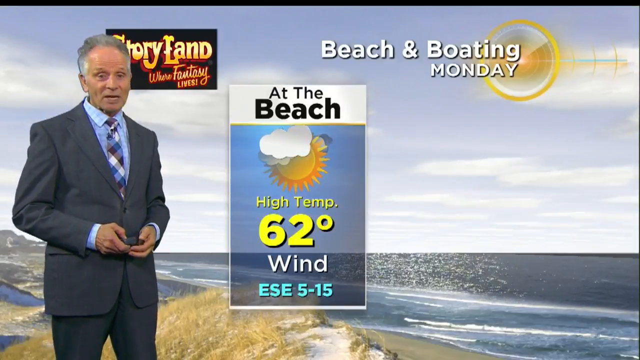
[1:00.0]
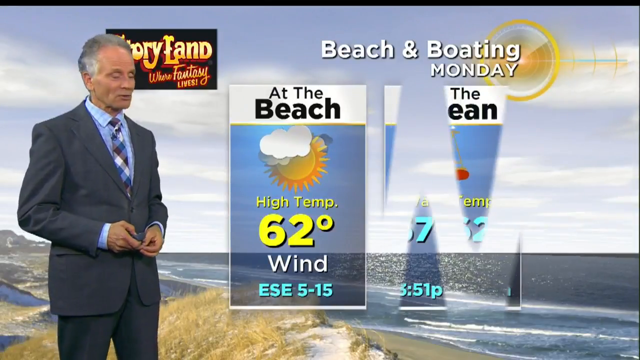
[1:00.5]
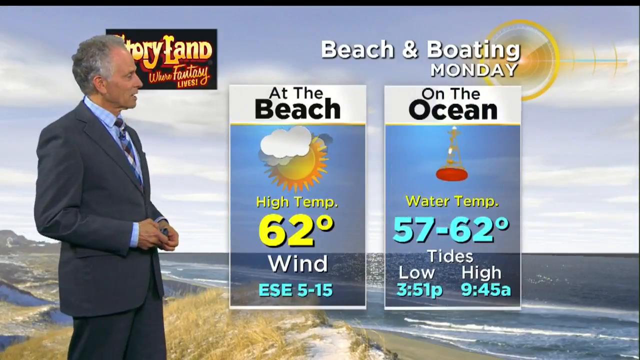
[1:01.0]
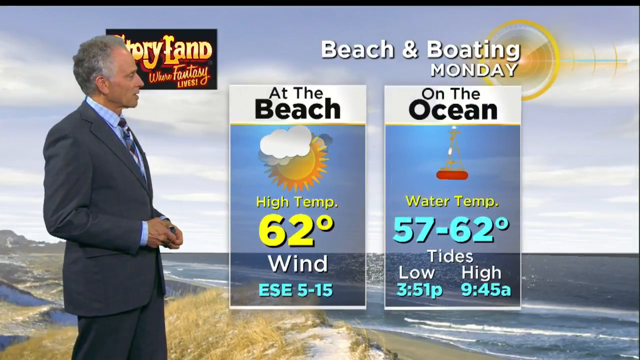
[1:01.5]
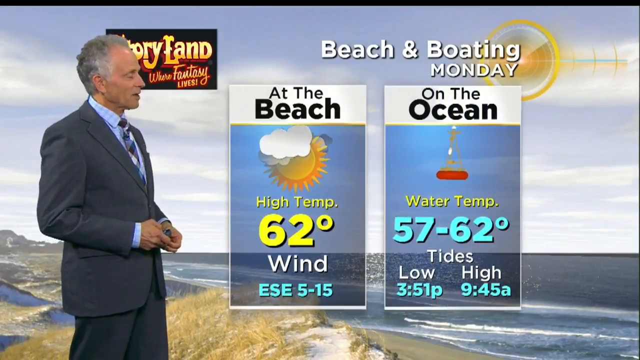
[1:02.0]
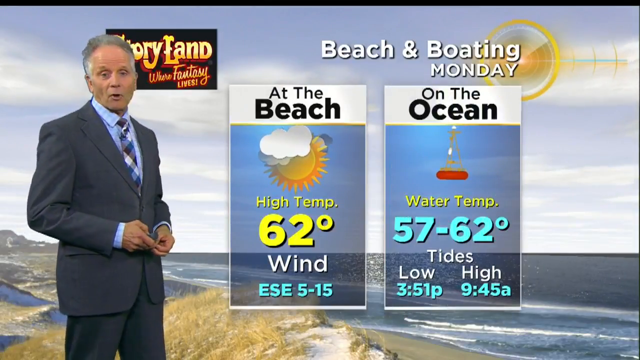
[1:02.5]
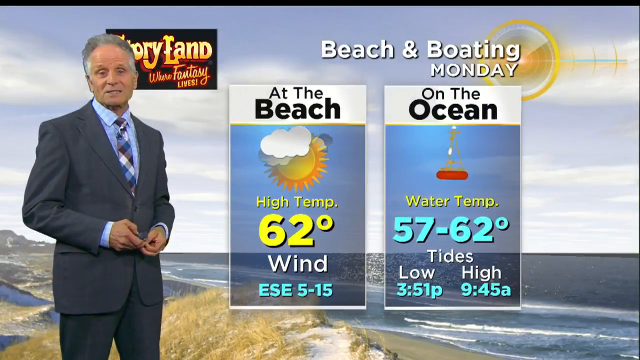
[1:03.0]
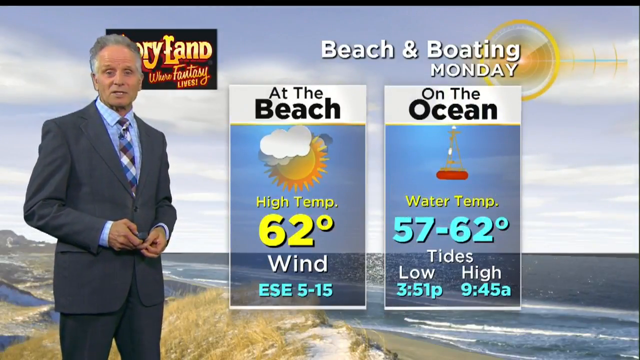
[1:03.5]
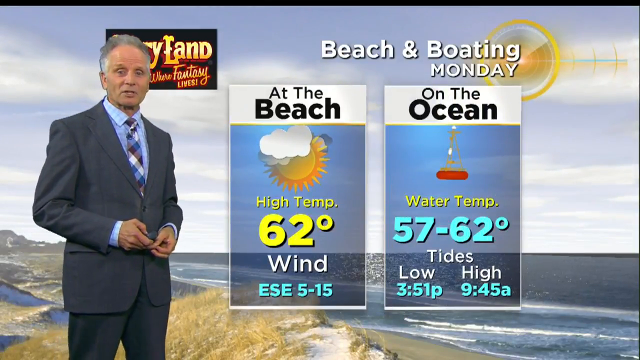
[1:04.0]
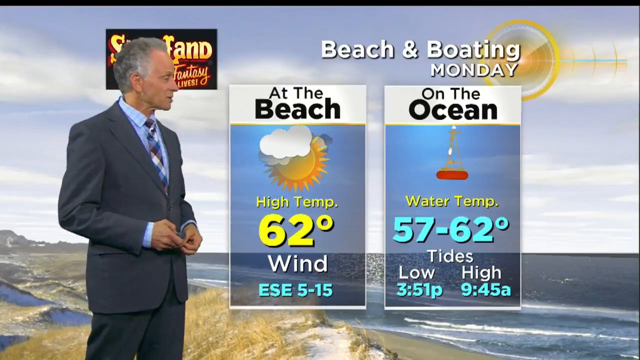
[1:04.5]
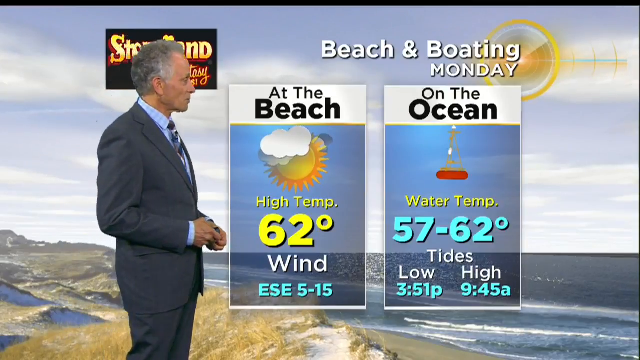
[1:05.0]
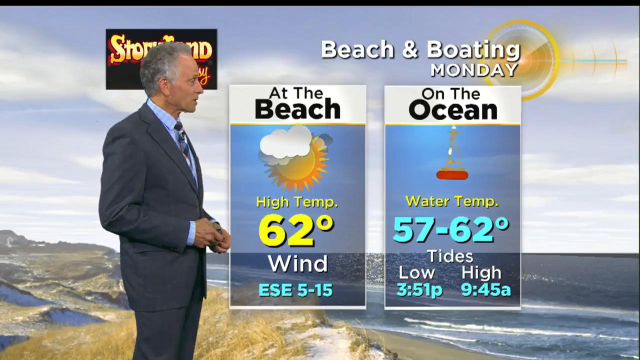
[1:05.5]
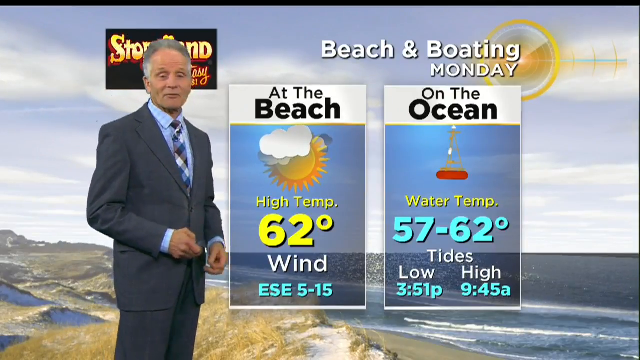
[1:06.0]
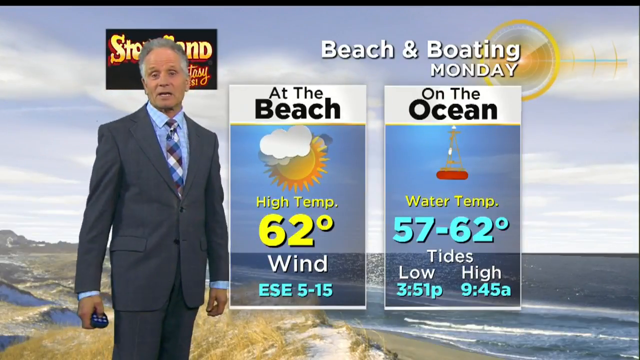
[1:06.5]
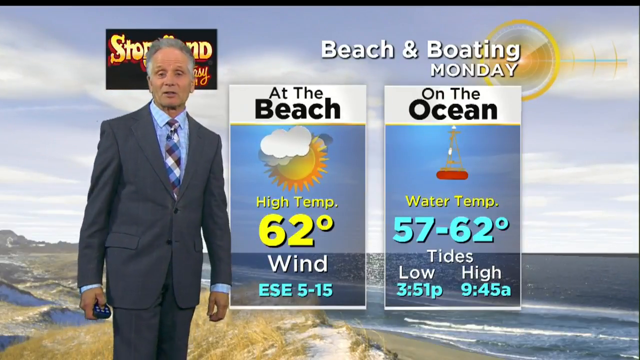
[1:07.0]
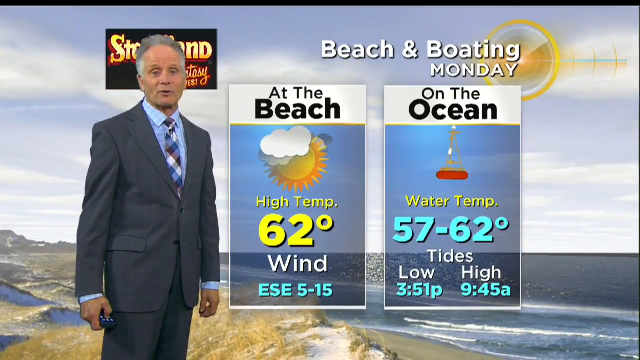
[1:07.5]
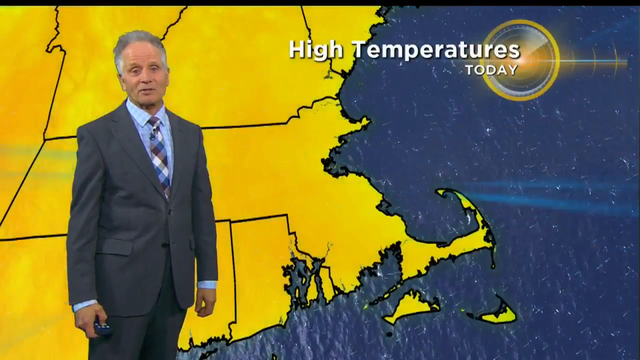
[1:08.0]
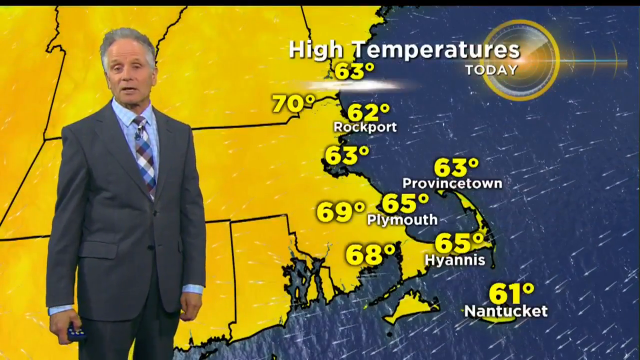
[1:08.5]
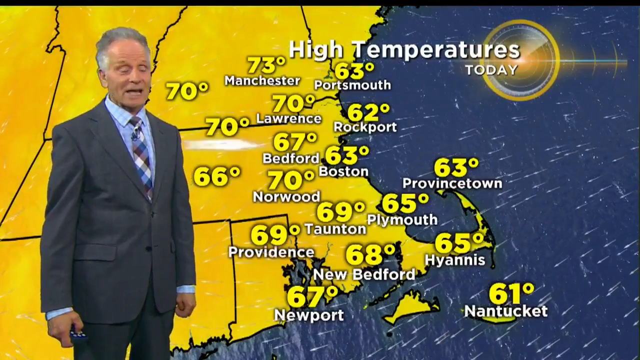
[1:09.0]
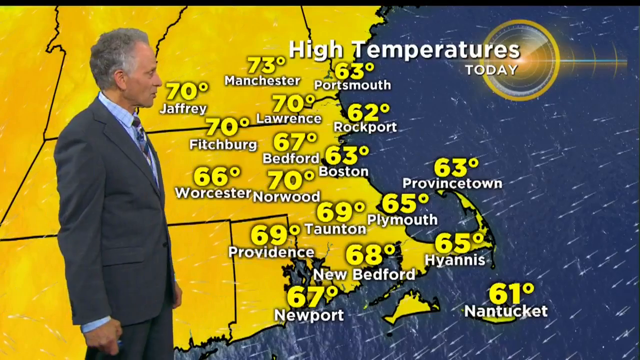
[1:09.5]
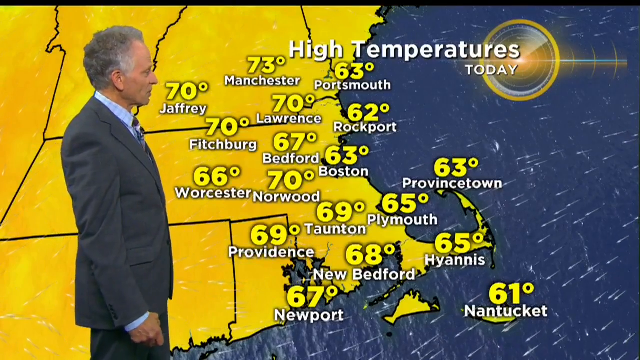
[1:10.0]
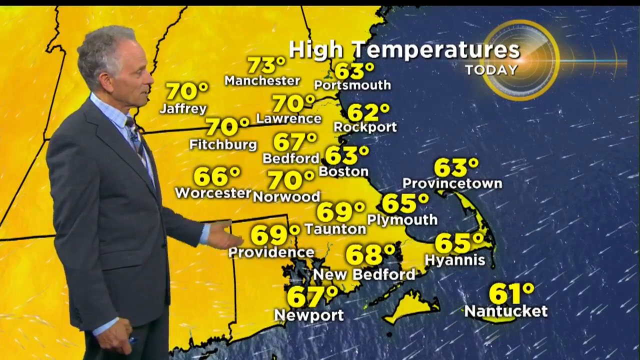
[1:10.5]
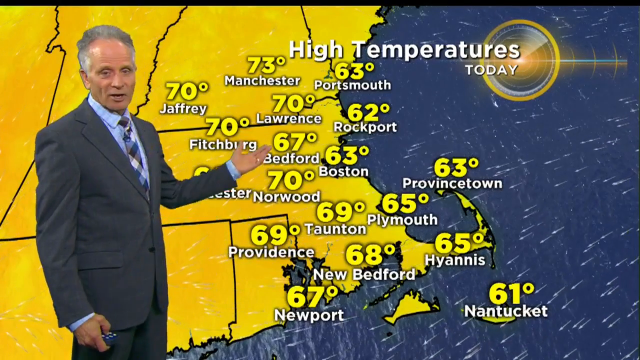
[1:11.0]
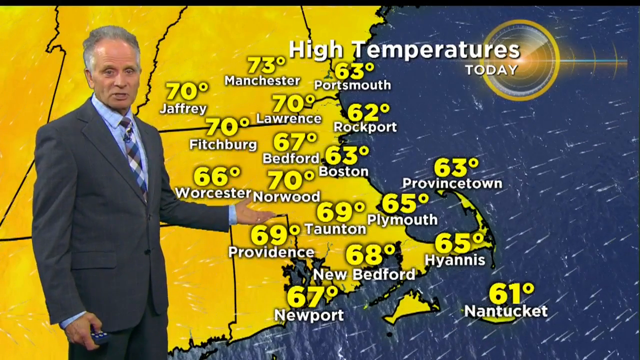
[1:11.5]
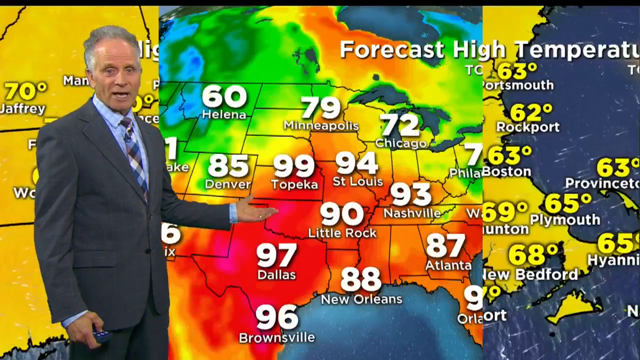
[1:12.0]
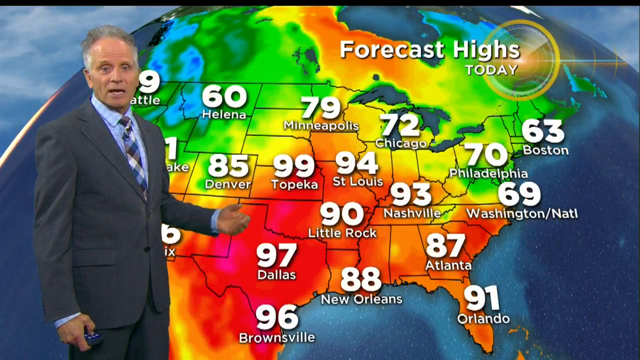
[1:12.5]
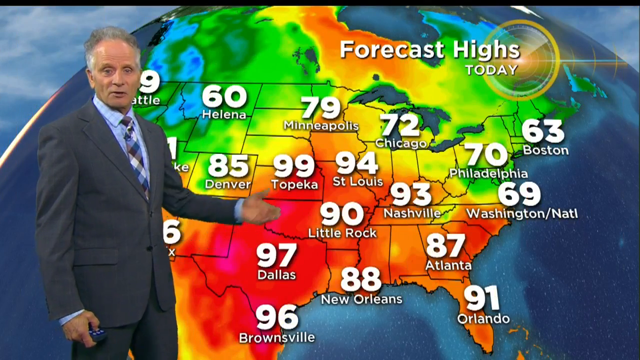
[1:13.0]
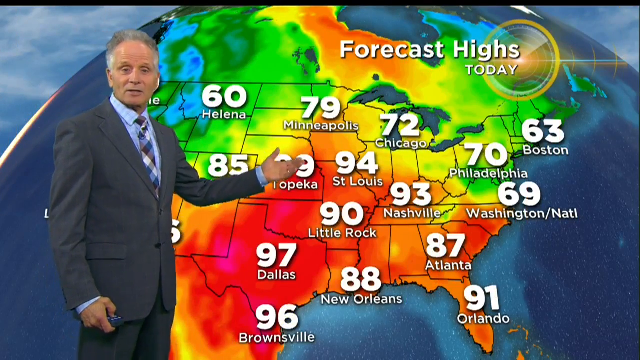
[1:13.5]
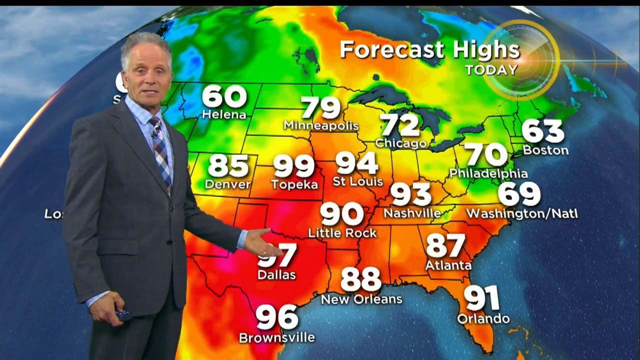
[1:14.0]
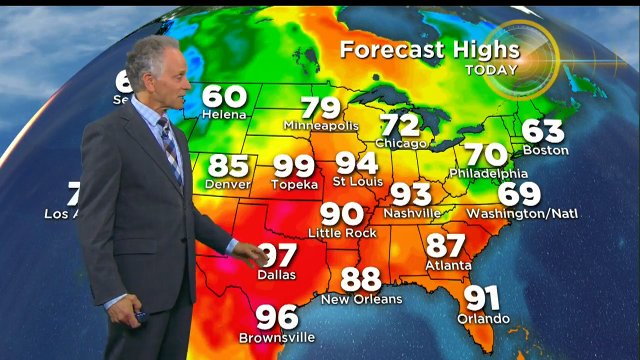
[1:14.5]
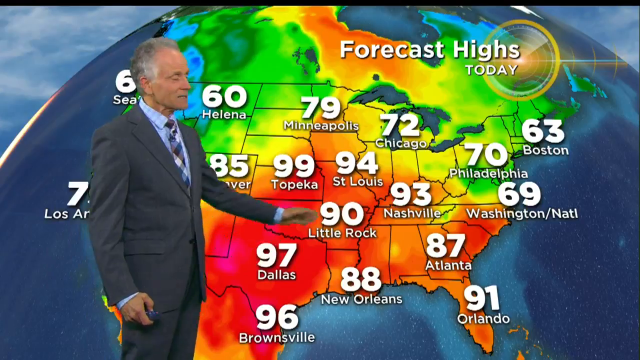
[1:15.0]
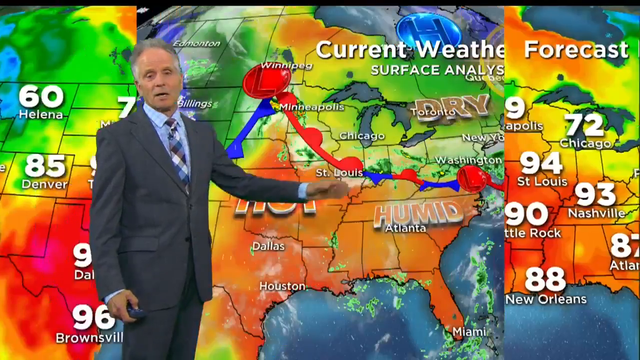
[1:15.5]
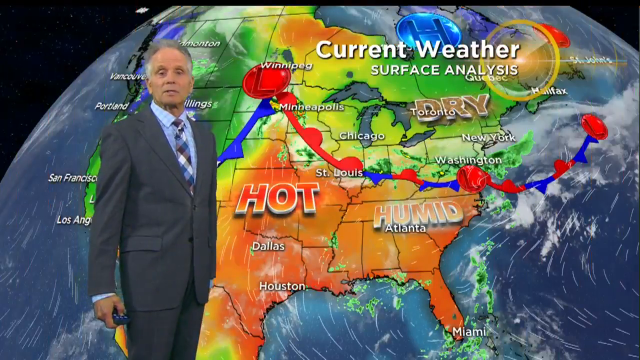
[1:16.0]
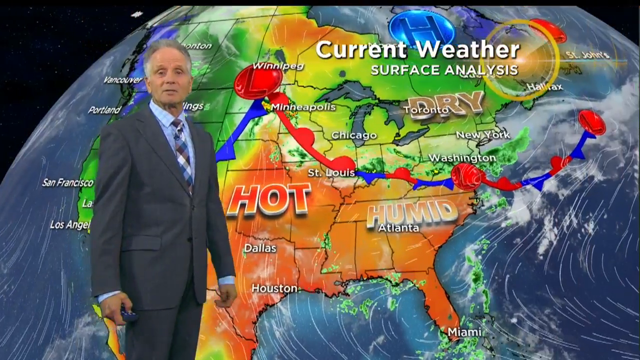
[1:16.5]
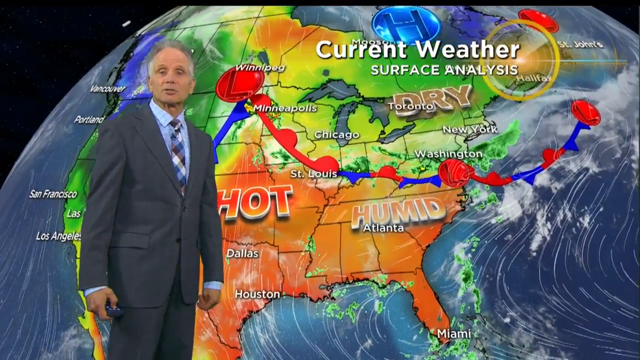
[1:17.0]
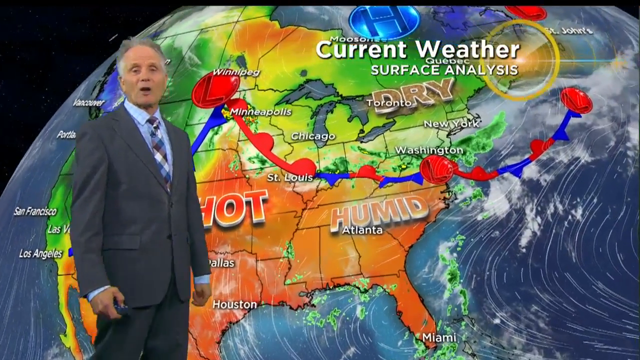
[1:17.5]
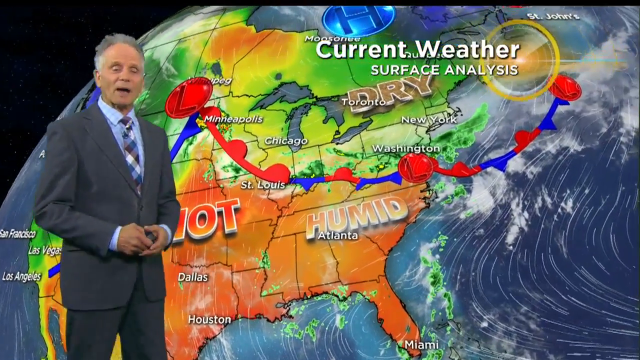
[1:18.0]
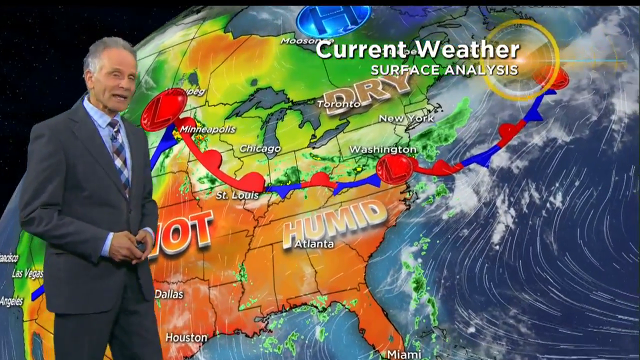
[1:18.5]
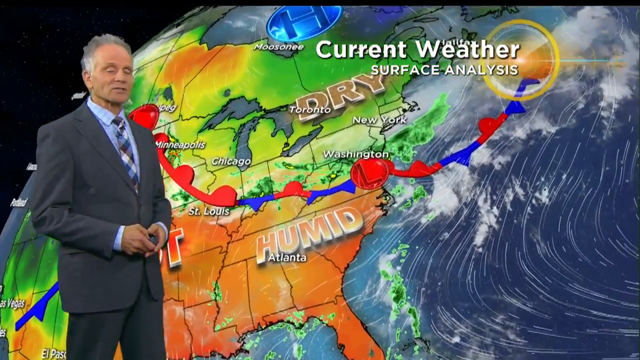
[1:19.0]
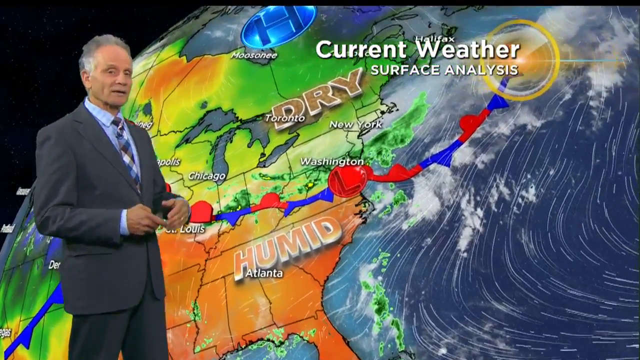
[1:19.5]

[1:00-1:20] On the beach screen, the meteorologist is to the left in a gray suit and light blue shirt, with gray hair, talking. At the top left a black box reads "Storyland, where fantasies live", and to the right it reads "beach and boating Monday". One box reads "at the beach, high temperature 62, wind east-southeast 5 to 15", and the next reads "on the ocean, water temperature 57 to 62 degrees, tides low and high, 3.51 p.m. to 9.45 a.m." A beach is in the background. A new screen shows all the states in yellow, looking dark, with dark blue water to the right, rain coming in from the east, and high temperatures for different cities around the Boston area. Another screen reads "forecast highs" and shows the whole country in red, green, blue and orange, with temperatures in white; he continues to talk and uses his arms to show different temperatures. Another screen reads "current weather surface analysis" and shows different parts of the country labeled "hot and humid" and others "dry and green", with orange, red and blue colors across it.